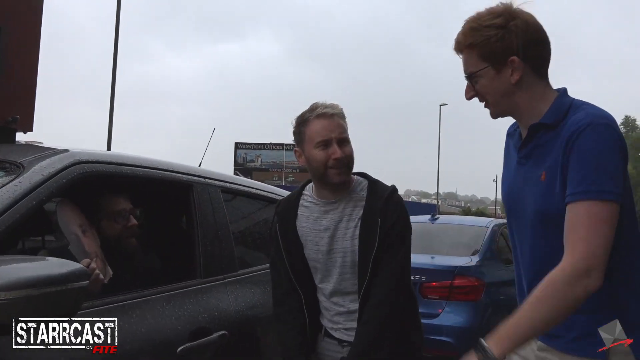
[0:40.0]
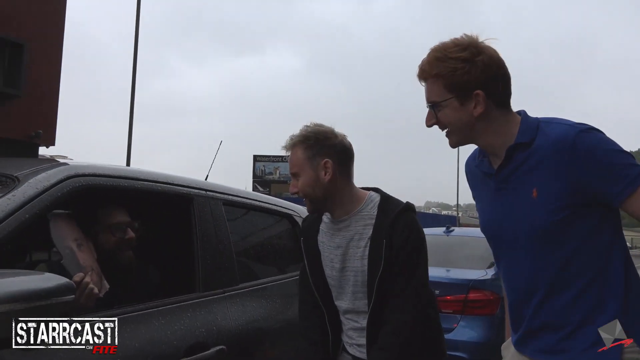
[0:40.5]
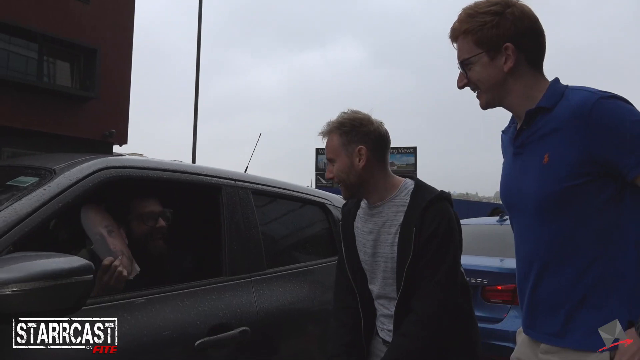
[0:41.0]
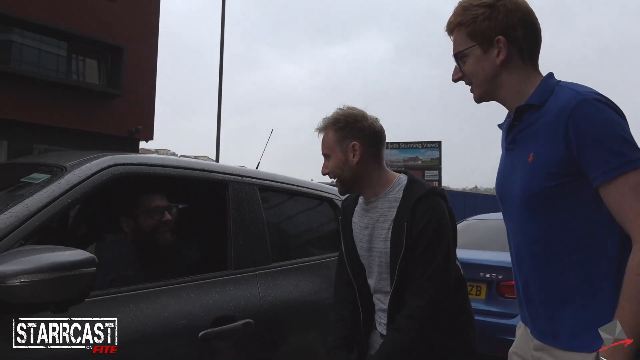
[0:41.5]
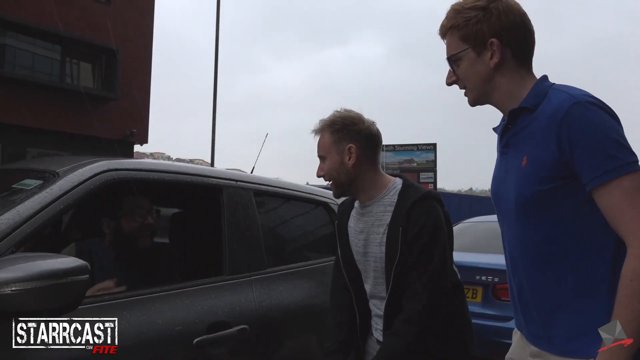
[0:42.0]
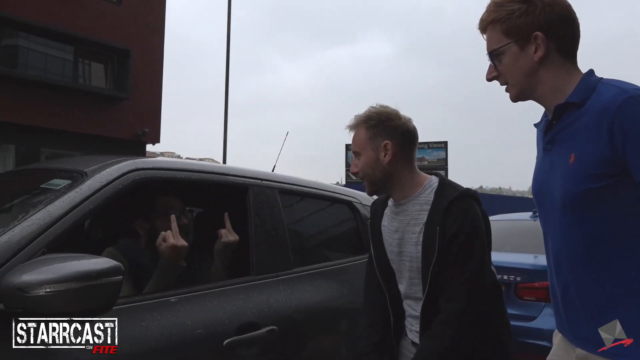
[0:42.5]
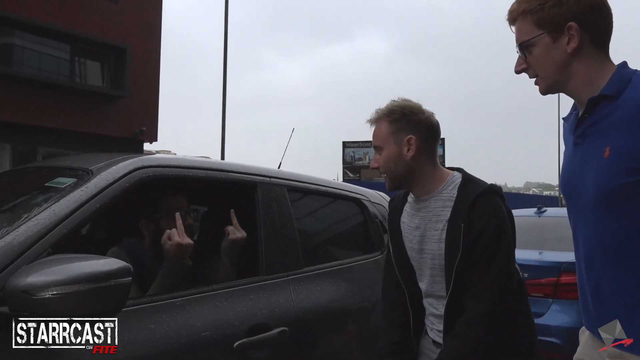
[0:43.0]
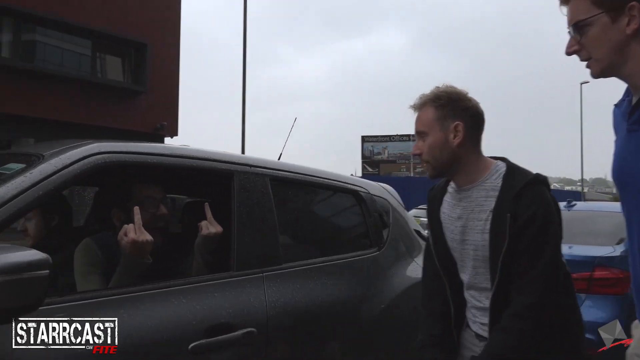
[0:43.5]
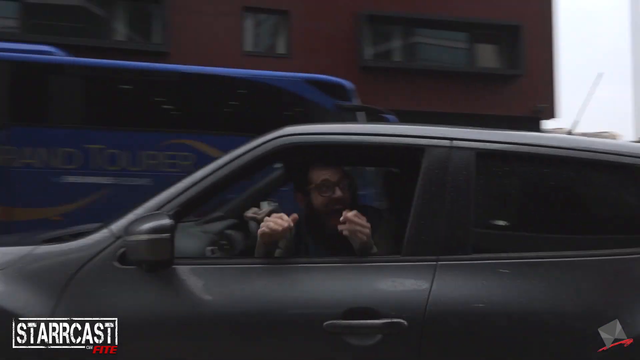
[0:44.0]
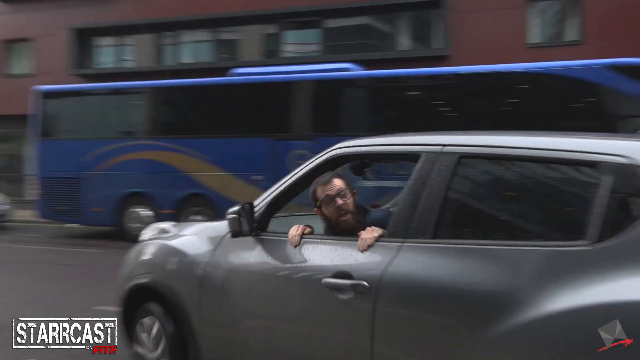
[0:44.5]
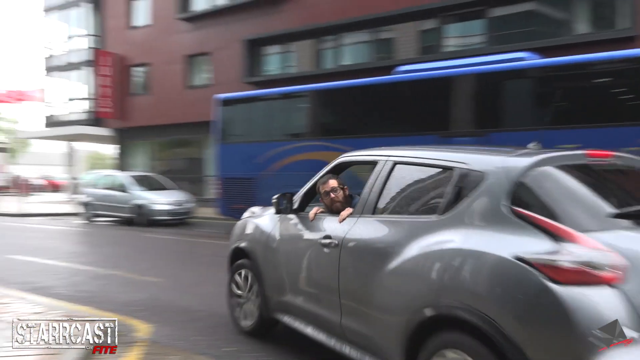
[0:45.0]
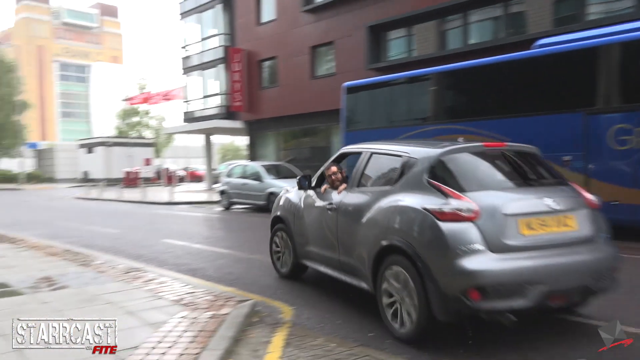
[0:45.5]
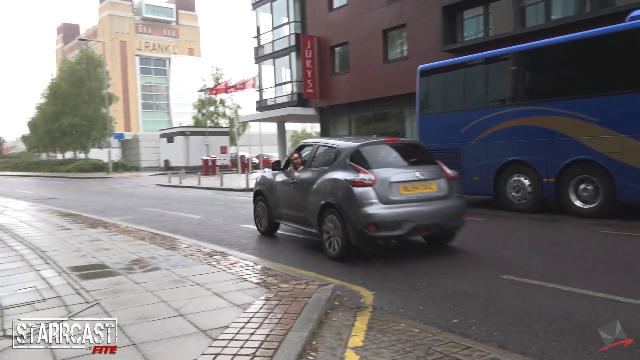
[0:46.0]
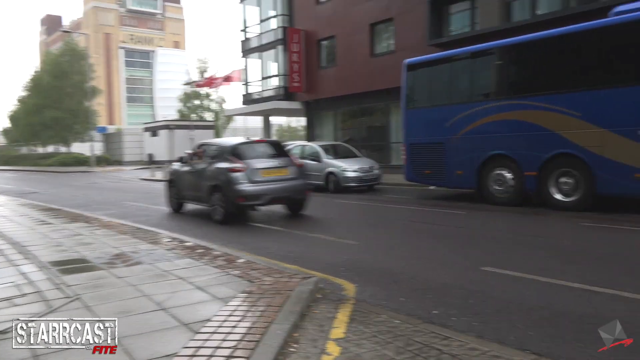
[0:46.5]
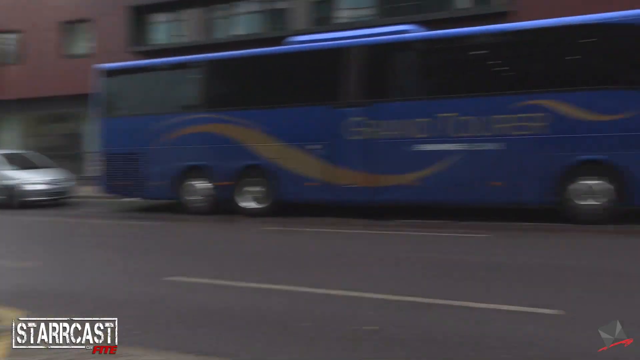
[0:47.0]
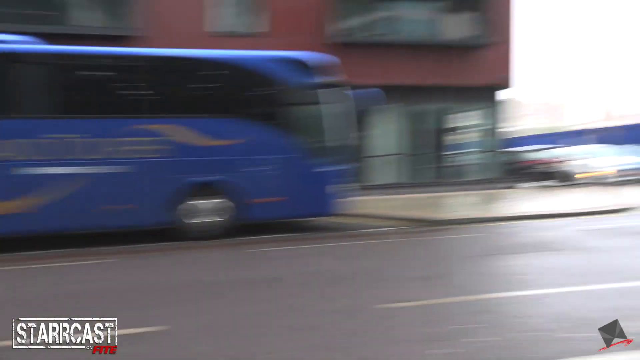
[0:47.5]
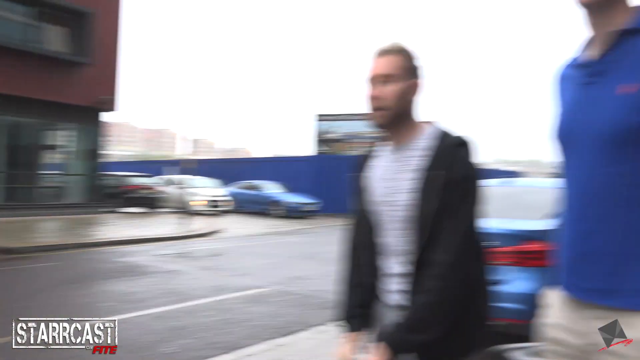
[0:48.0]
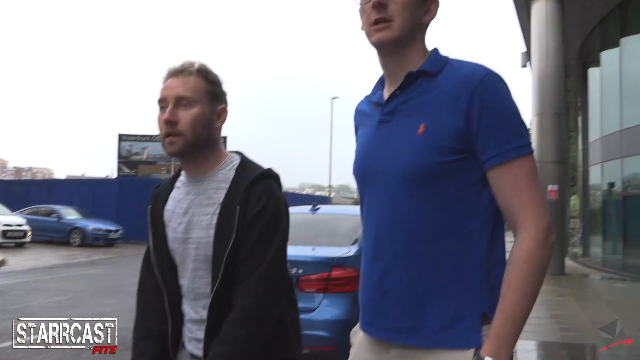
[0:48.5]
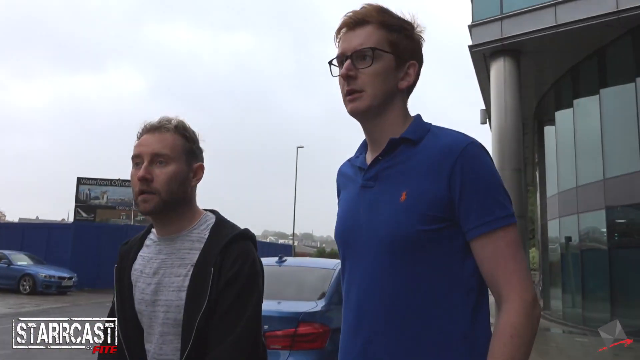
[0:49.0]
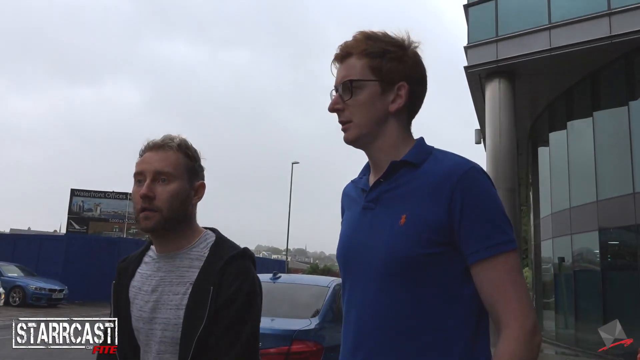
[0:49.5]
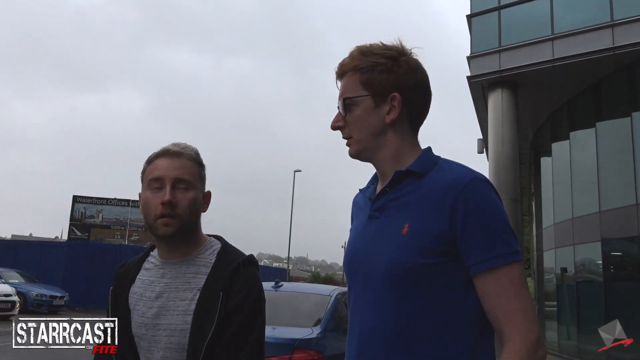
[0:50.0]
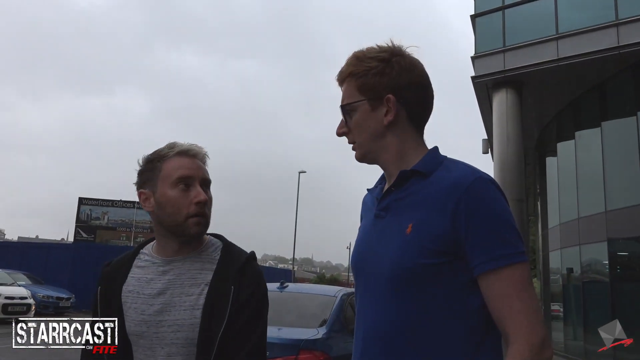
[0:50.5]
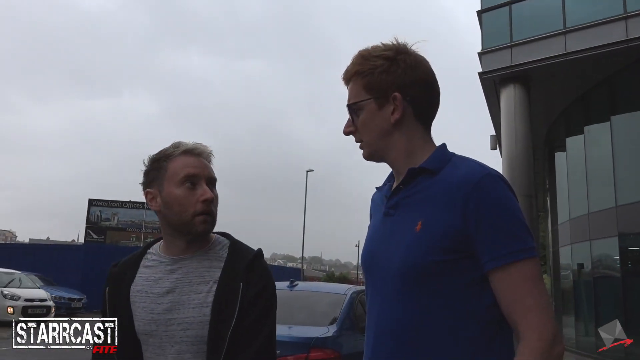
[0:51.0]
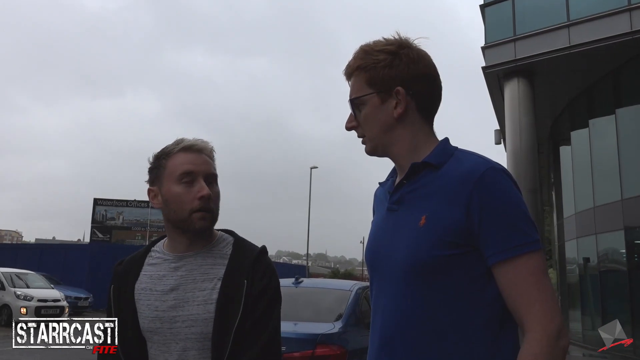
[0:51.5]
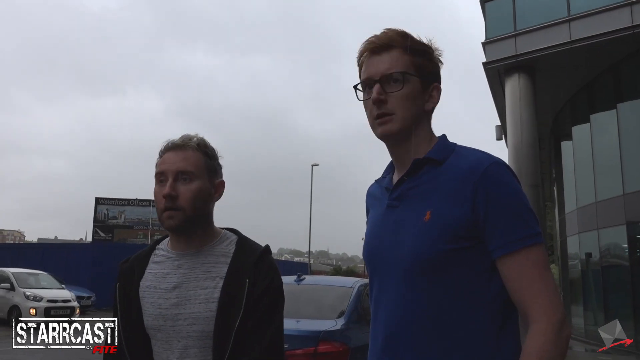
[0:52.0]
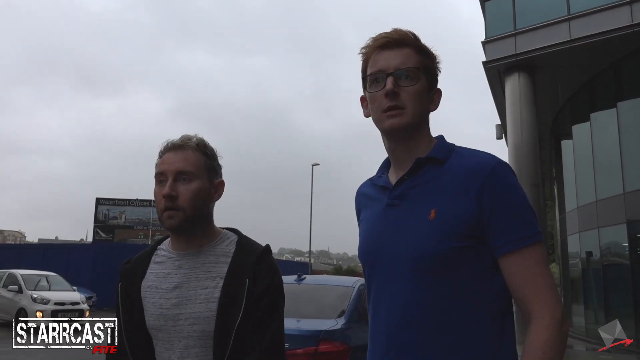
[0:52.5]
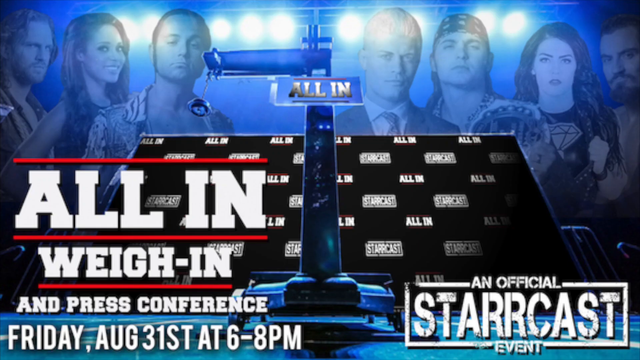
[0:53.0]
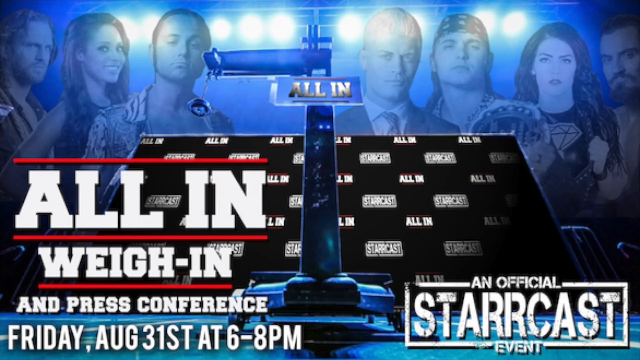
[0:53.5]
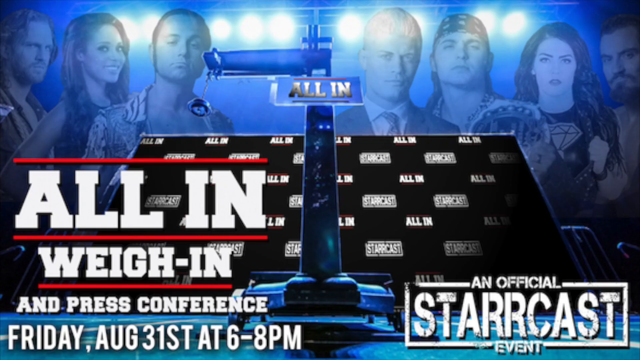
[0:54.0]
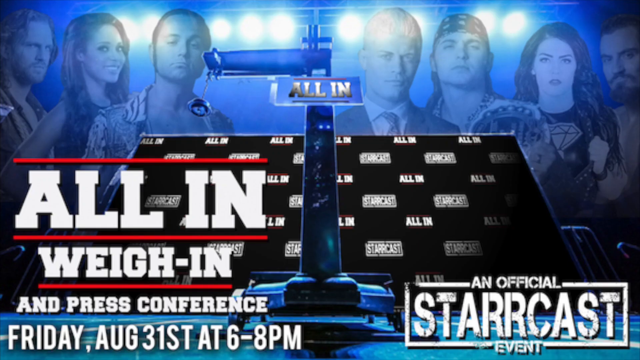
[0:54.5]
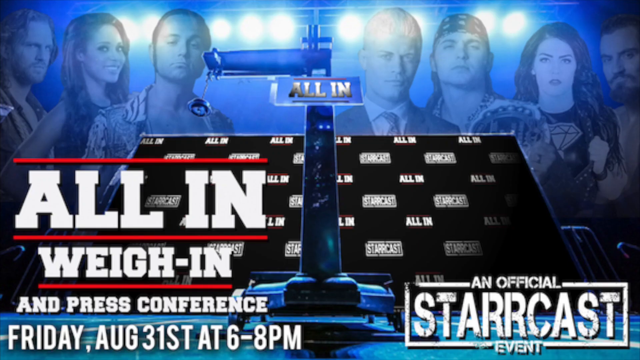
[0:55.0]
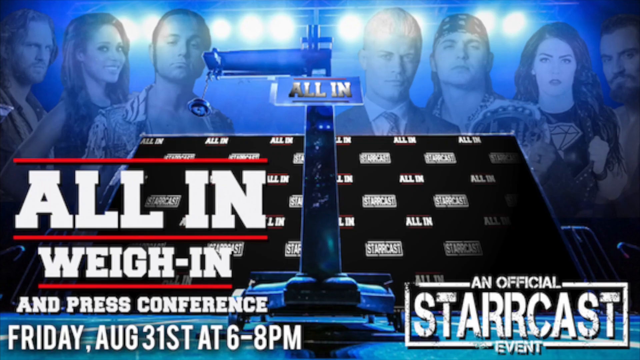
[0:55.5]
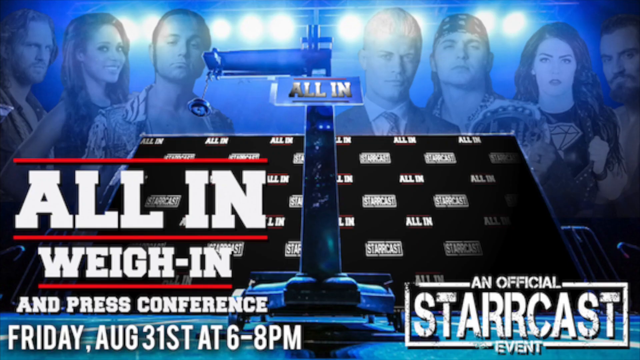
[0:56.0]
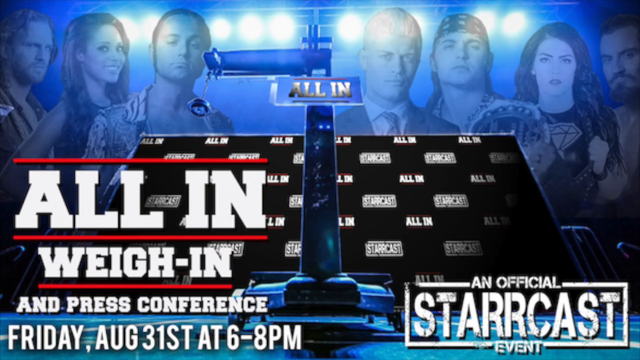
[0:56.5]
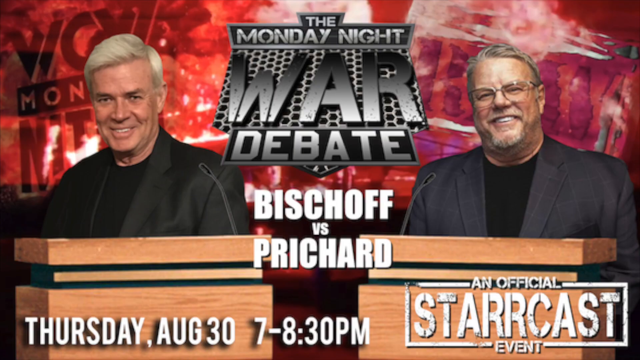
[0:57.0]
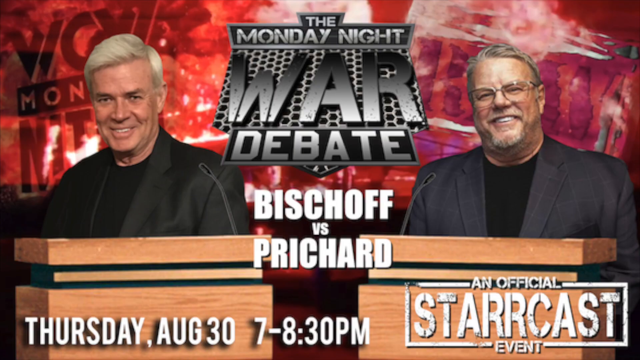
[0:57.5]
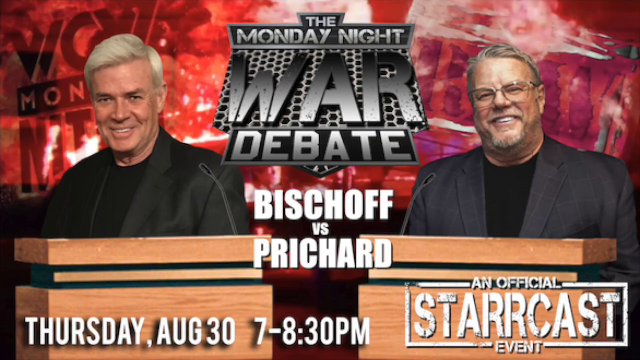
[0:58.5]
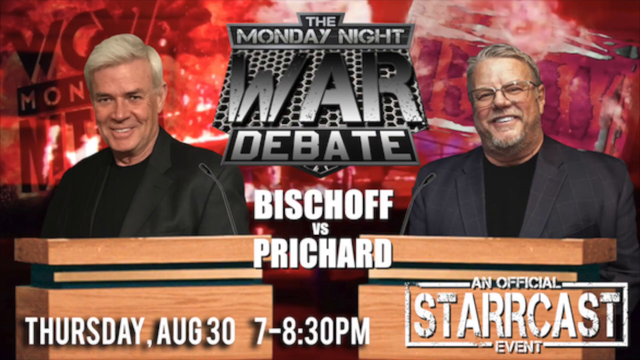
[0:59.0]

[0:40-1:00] Outside, two men speak to a man in a small car, trading words back and forth. The man in the car turns out not to be the driver: he gives them the middle finger with both hands as the car starts to drive away, then puts his hands on the sides of the car and looks back at the two men. As the car pulls away, a European license plate is visible. The two men stand on the sidewalk, completely stunned, in front of a very modern building. One wears a blue polo golf shirt and the other a gray T-shirt with a lightweight jacket. The screen then changes to a group of people, with text reading "all in weigh in"; it is a conference. Next, text reads "the Monday night war debate, Pitchcock versus Pritchard" on Thursday, August 30th at 7.30.